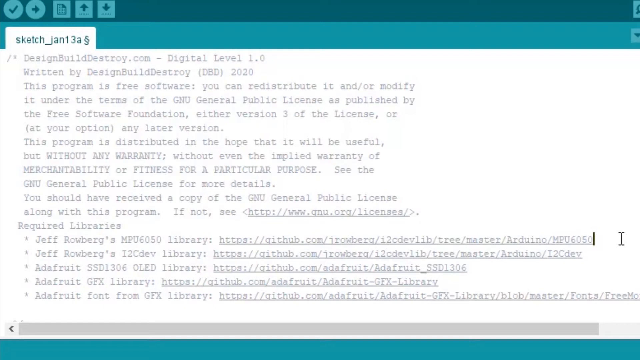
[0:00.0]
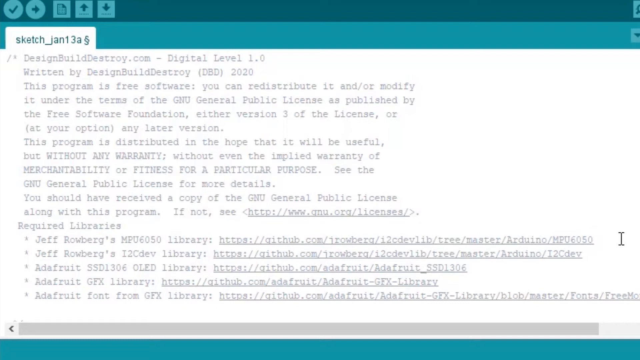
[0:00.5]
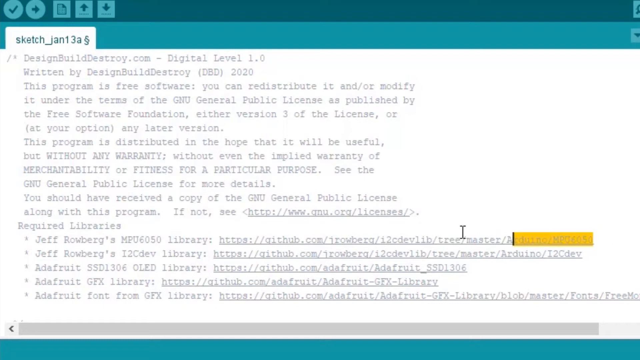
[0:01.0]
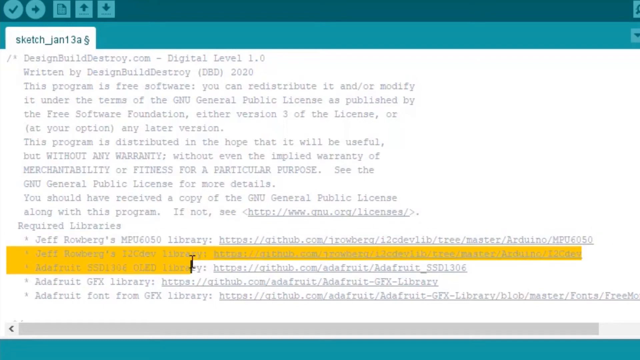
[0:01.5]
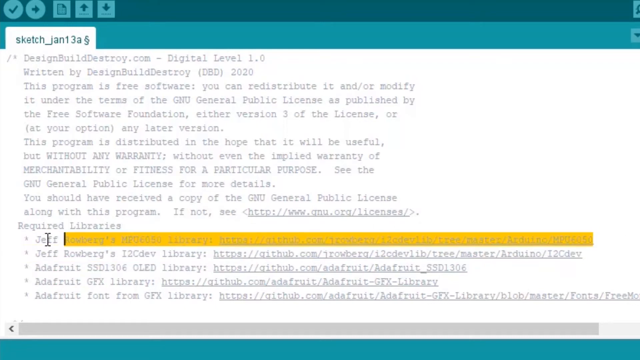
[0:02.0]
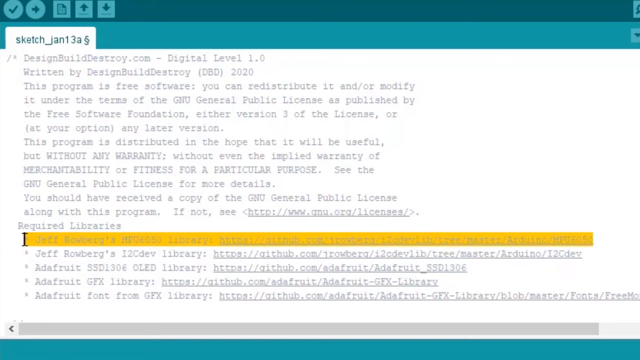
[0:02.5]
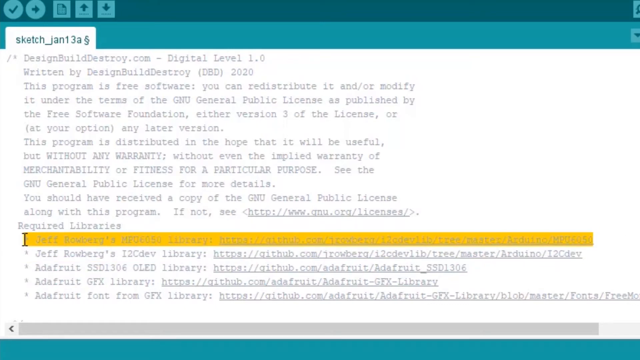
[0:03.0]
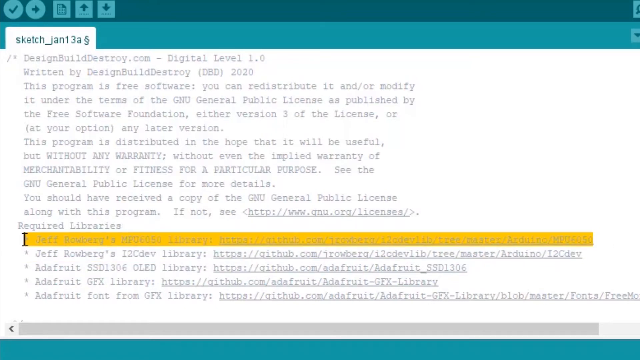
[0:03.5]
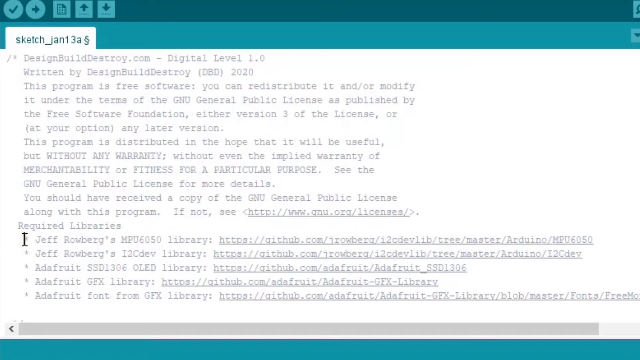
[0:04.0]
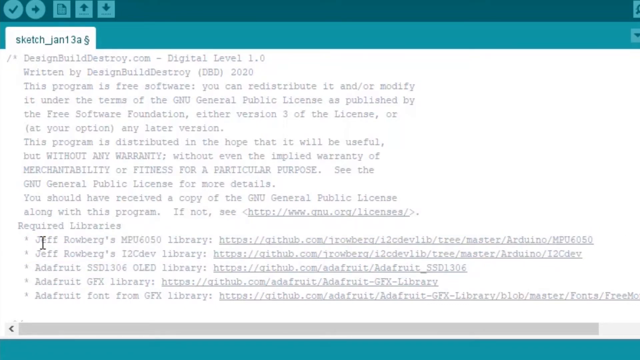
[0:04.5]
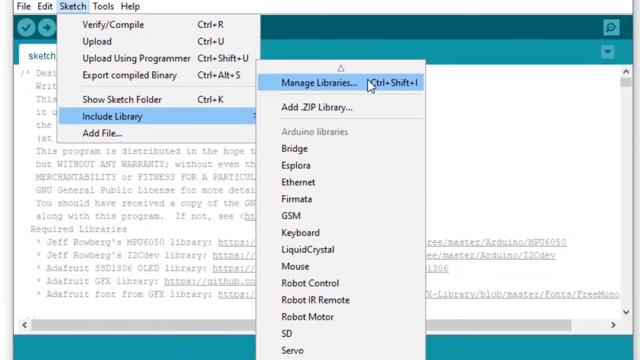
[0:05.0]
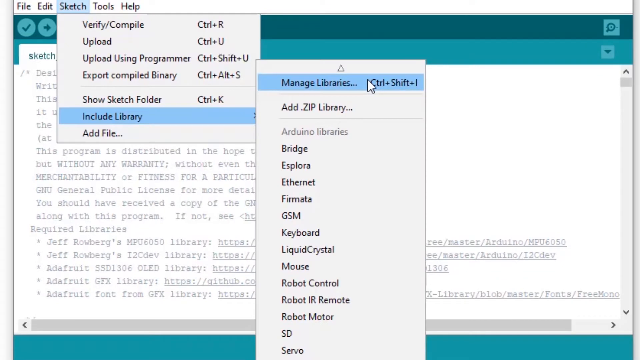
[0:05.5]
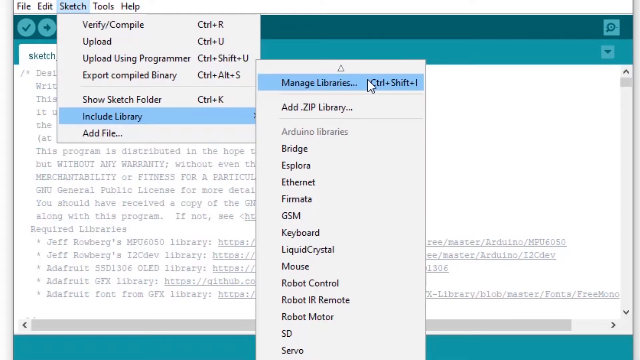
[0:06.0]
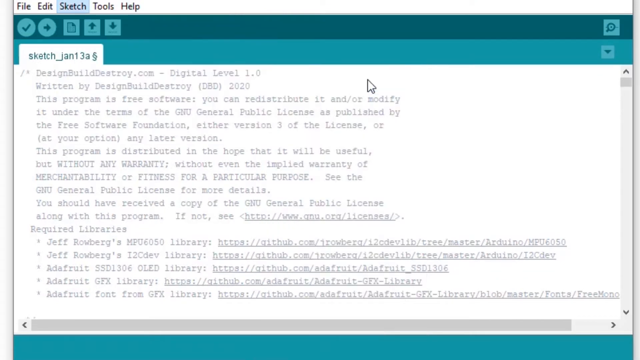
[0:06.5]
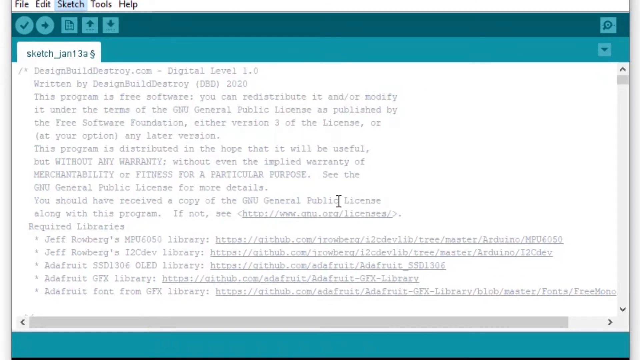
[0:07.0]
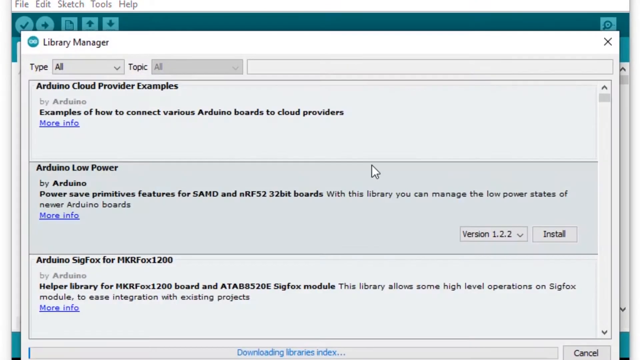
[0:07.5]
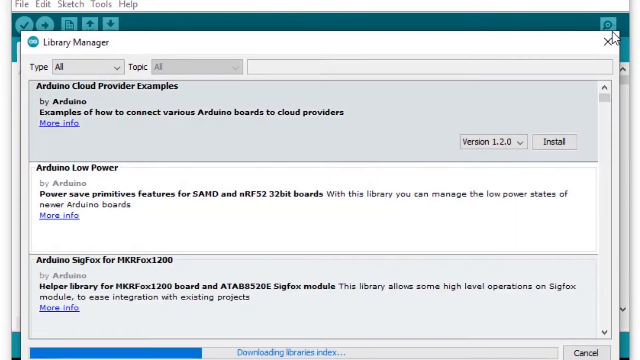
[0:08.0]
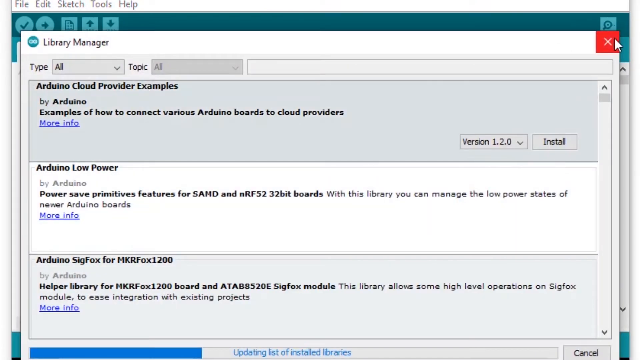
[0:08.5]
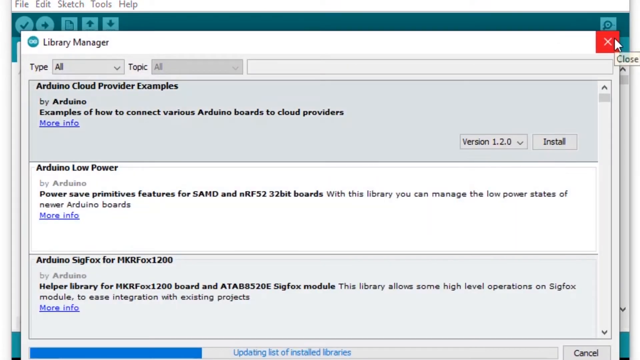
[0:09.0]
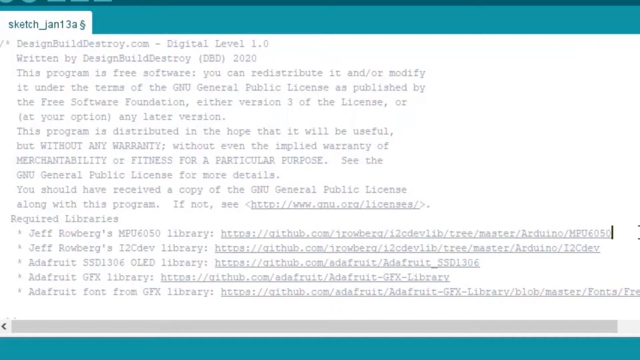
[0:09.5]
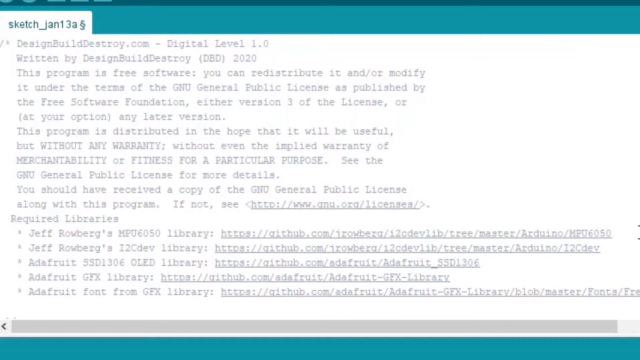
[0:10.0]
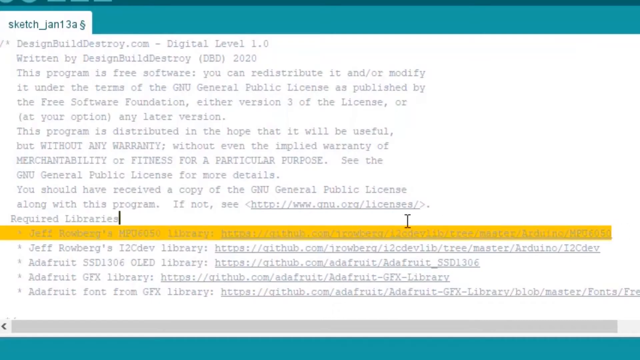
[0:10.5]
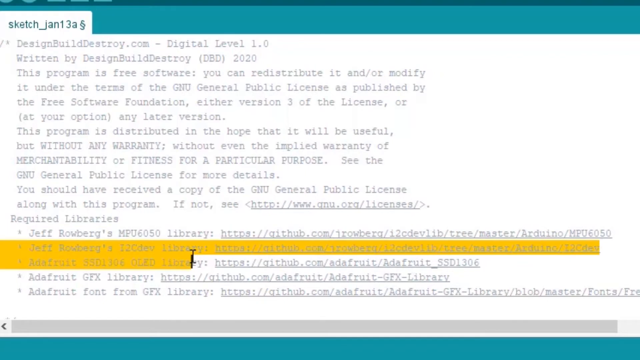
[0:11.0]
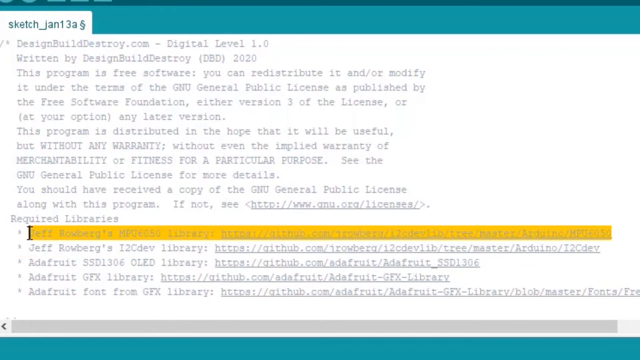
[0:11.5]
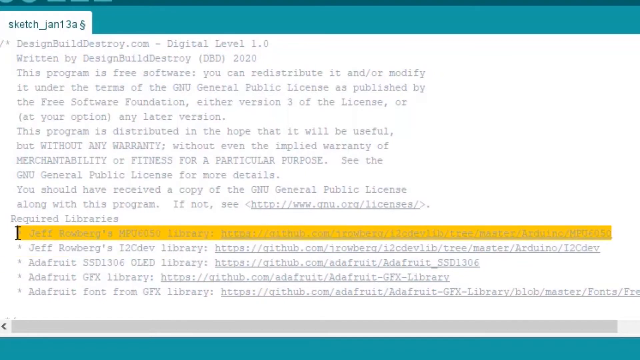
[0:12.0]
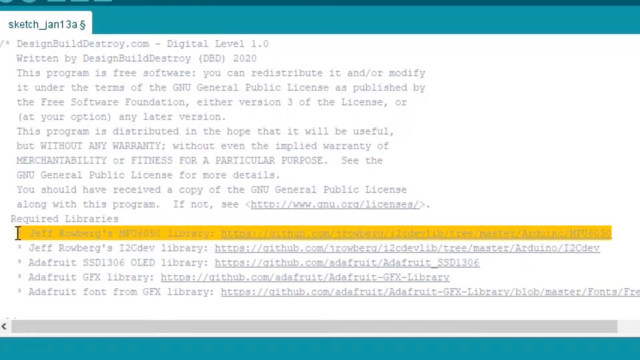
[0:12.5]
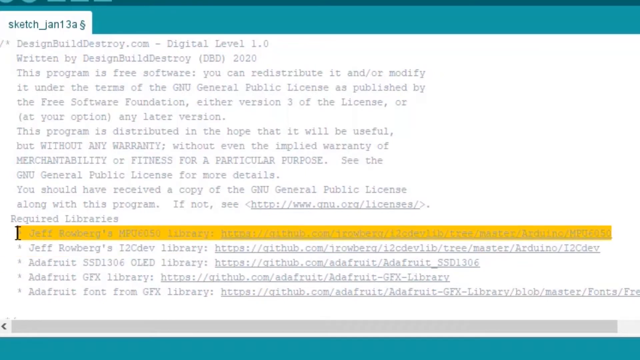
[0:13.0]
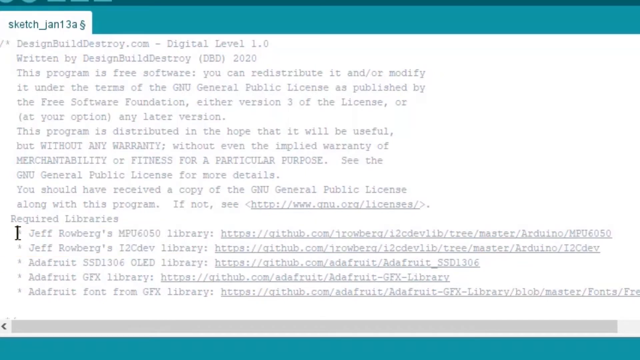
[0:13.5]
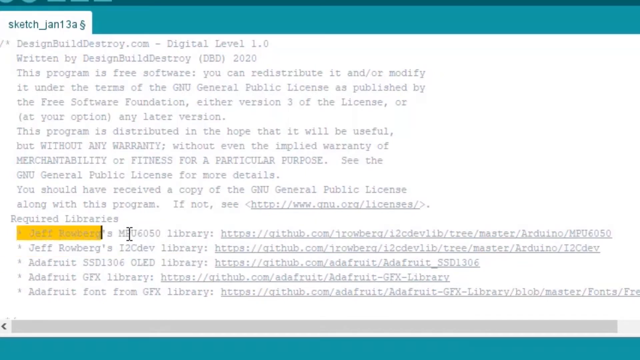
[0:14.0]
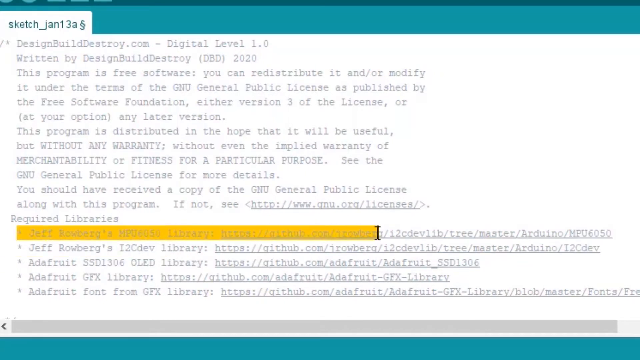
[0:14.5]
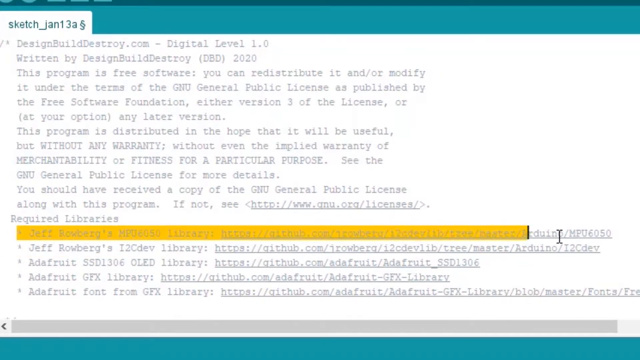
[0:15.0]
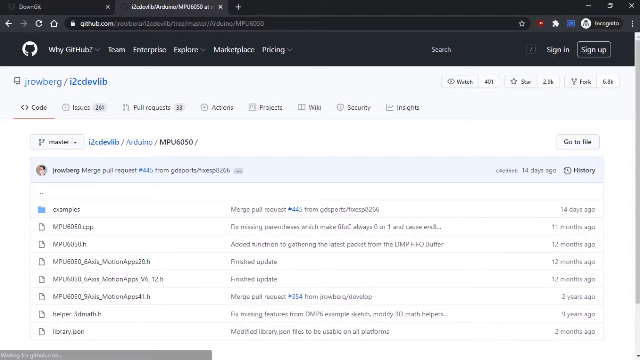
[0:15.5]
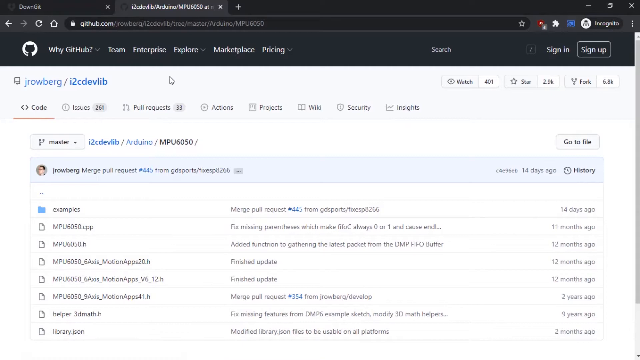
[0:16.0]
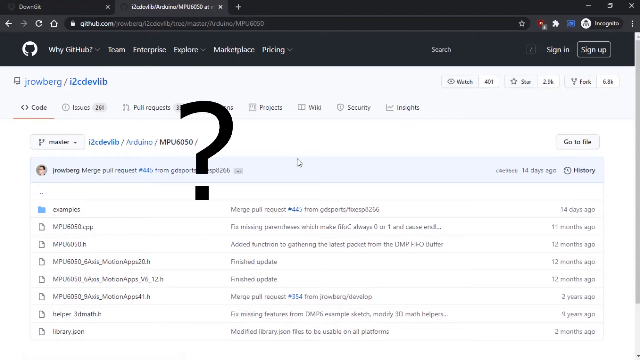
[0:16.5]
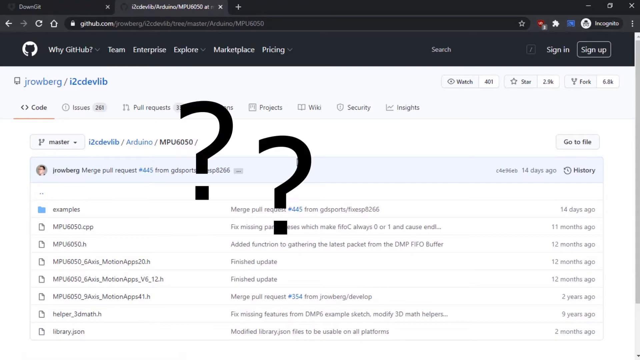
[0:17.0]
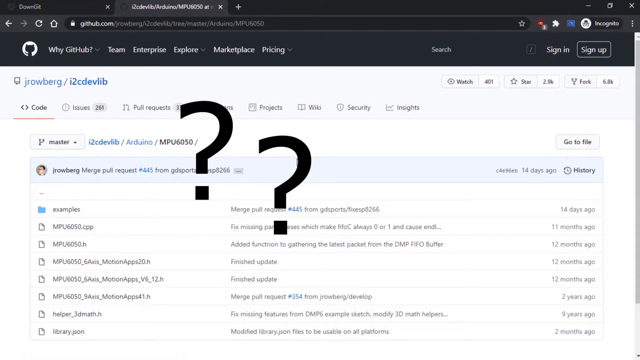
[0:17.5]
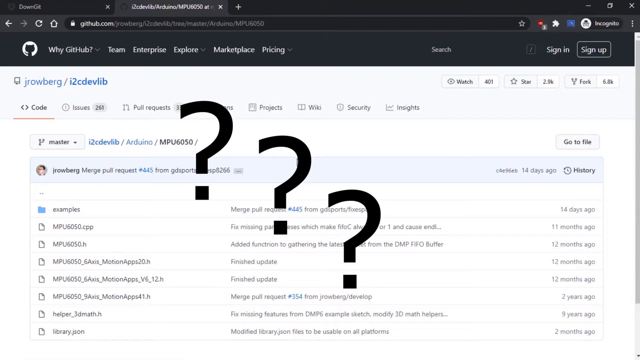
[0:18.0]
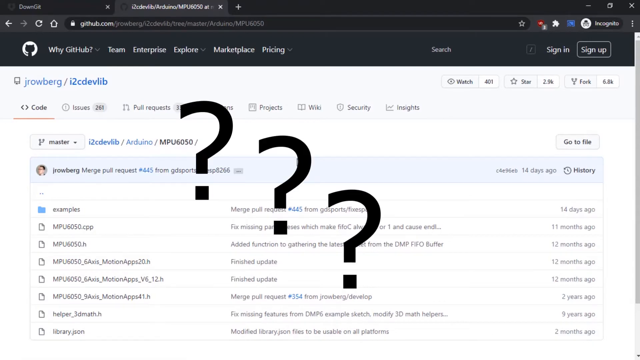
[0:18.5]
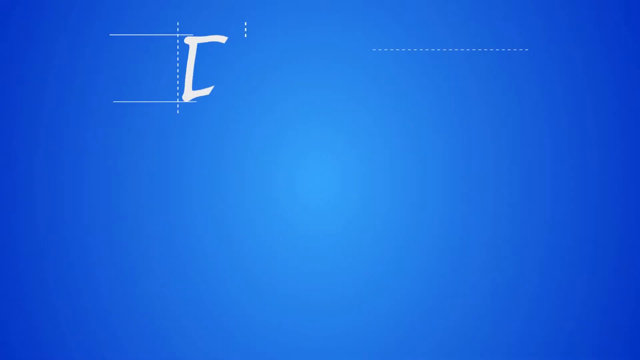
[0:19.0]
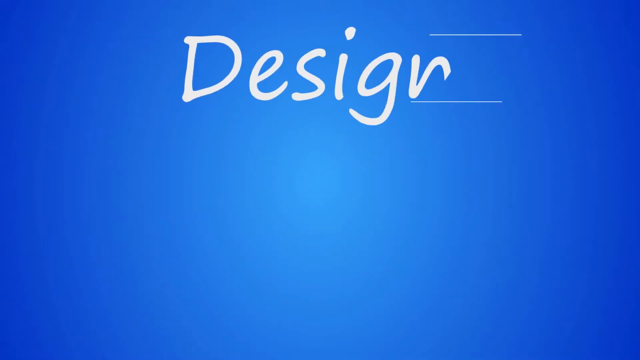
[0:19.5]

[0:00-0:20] A computer screen shows an Arduino sketch file named sketch_jan13a. The file contains some text, along with a list of required libraries and the web addresses for their GitHub locations. Using the visible cursor, the user highlights these libraries in yellow, starting with the first library at the top of the list. They then go to the menu at the top of the program and select the third option along, Sketch, which opens a drop-down menu. They go down to the sixth option, Include Library, which opens a new drop-down on the right side, and select its first option, Manage Libraries. A Library Manager pop-up opens; the user clicks on the red cross and closes it. Back in the Arduino sketch file text, they use the cursor to highlight the top library again. The screen then transitions to a web browser showing the library's address from the file, navigated to the GitHub website, with three question marks overlaying the screen.